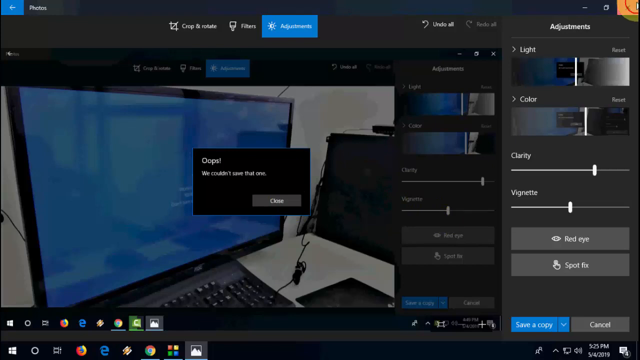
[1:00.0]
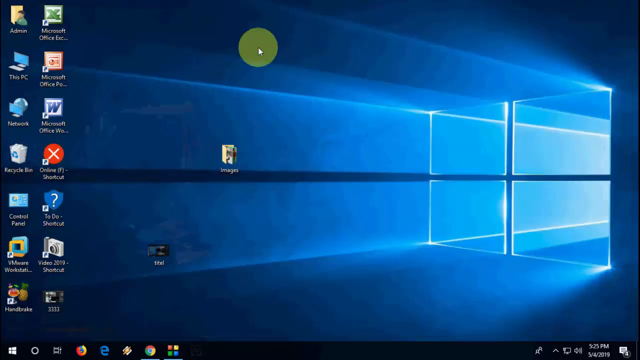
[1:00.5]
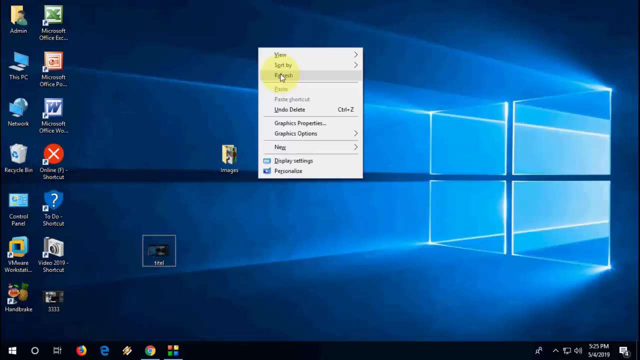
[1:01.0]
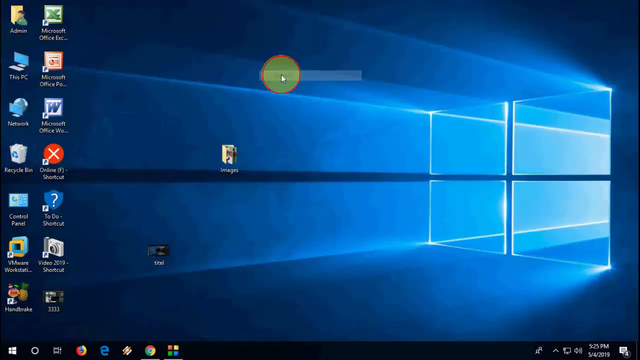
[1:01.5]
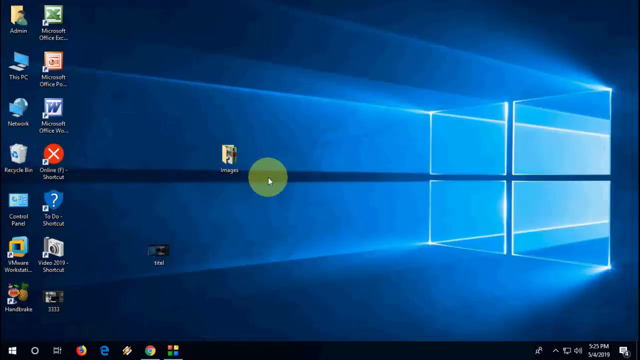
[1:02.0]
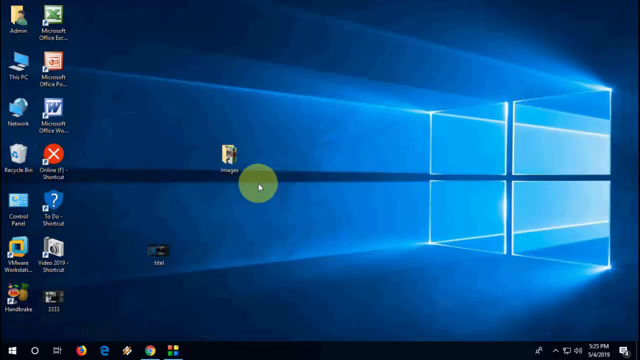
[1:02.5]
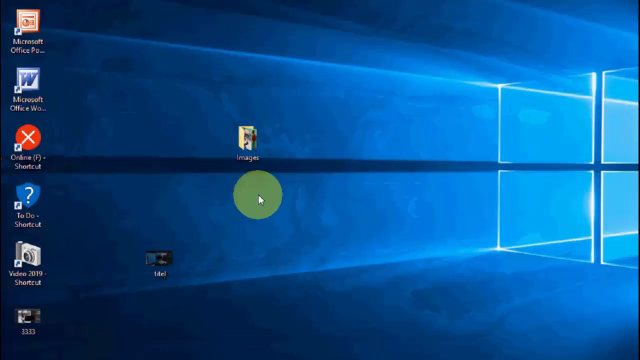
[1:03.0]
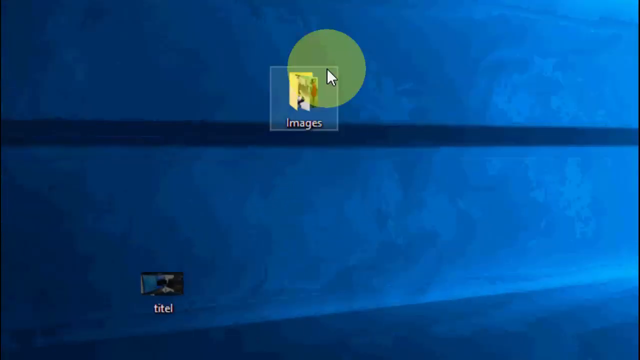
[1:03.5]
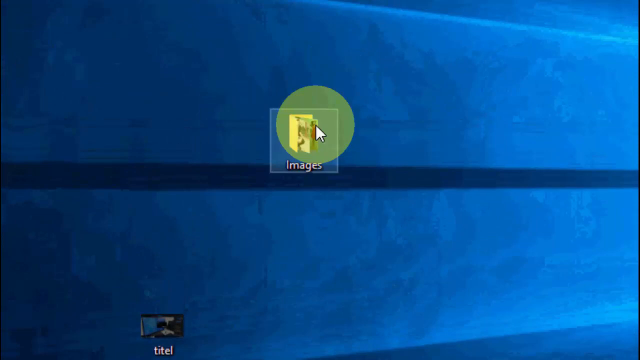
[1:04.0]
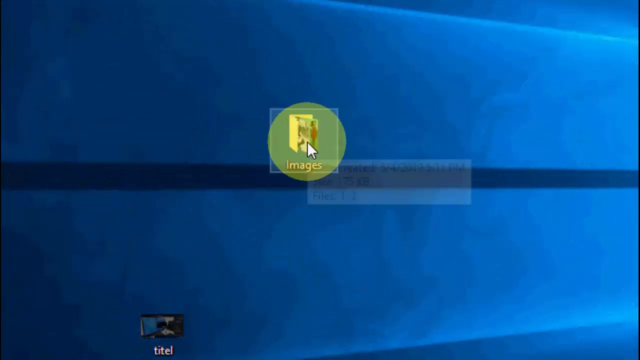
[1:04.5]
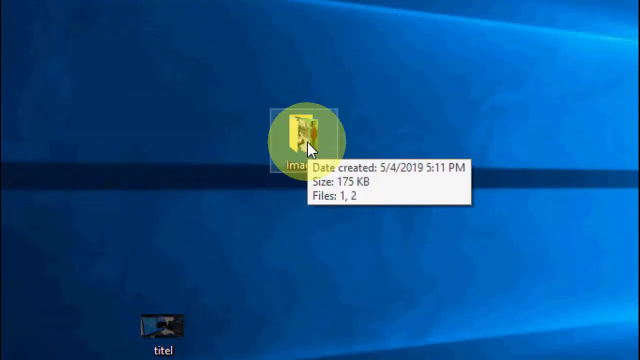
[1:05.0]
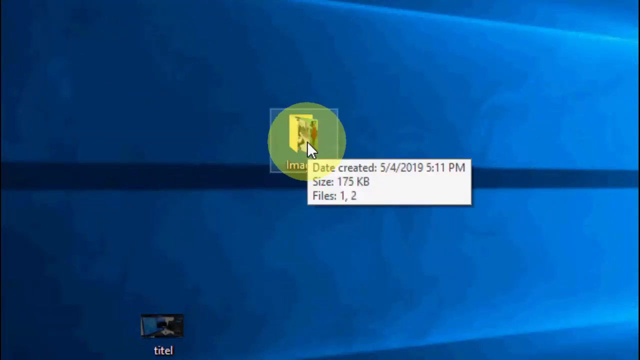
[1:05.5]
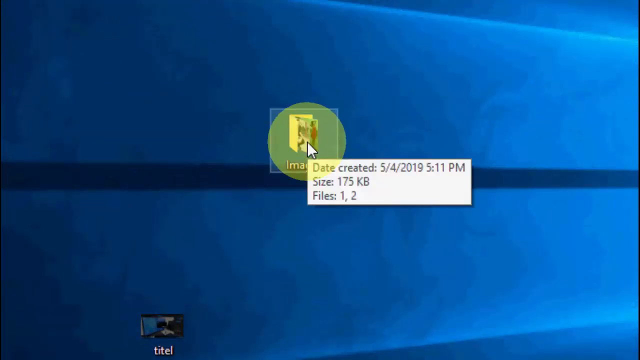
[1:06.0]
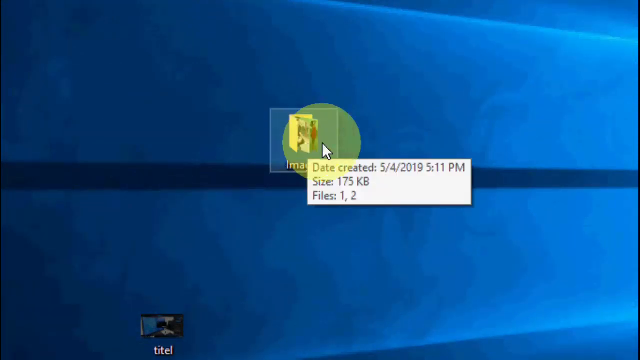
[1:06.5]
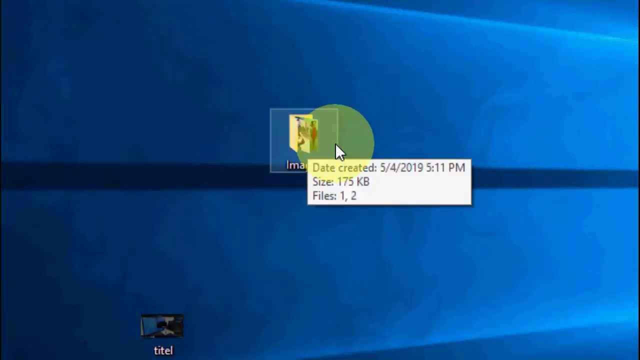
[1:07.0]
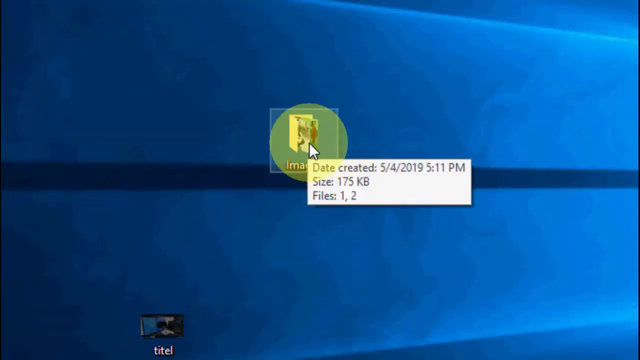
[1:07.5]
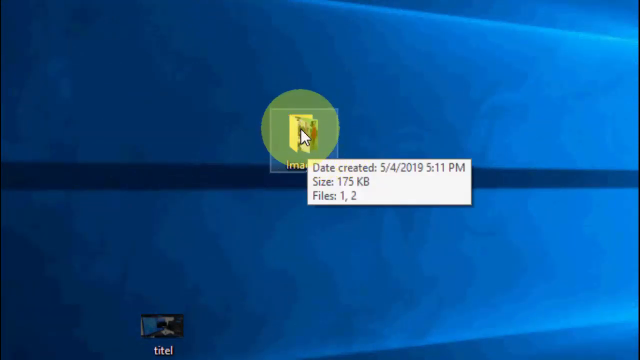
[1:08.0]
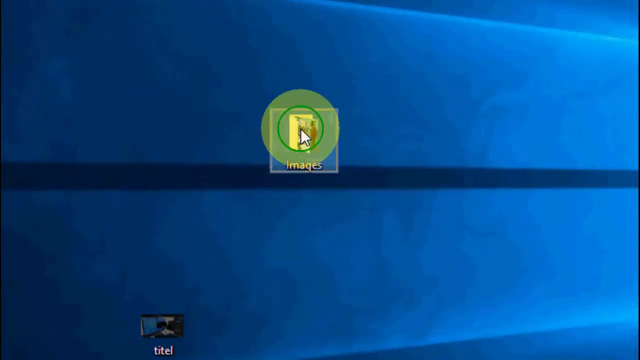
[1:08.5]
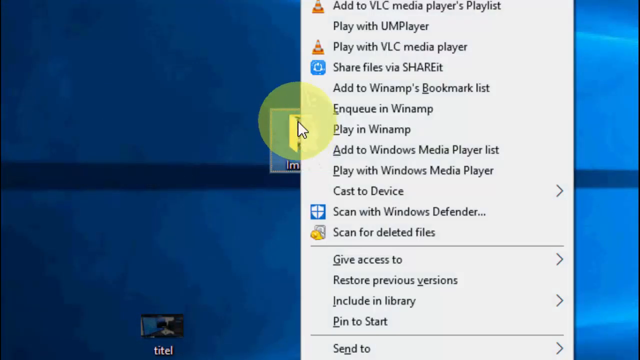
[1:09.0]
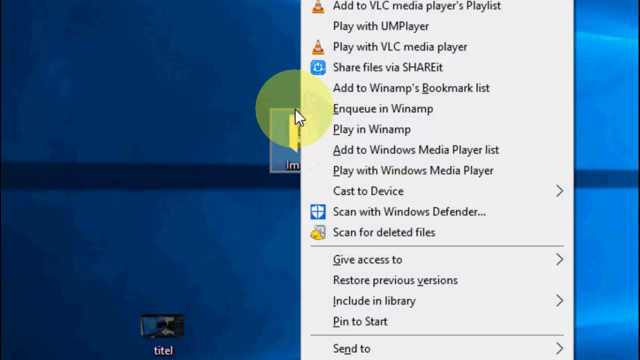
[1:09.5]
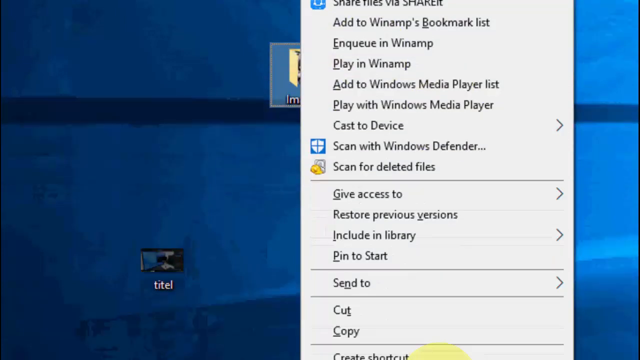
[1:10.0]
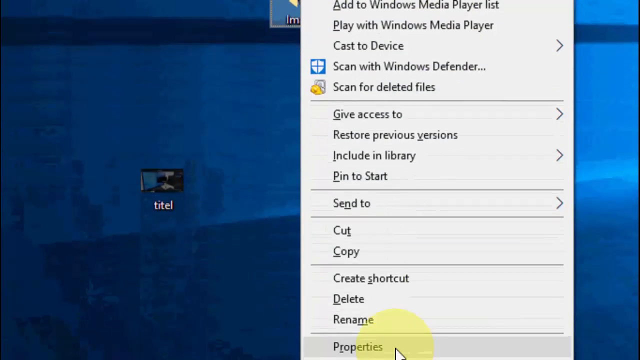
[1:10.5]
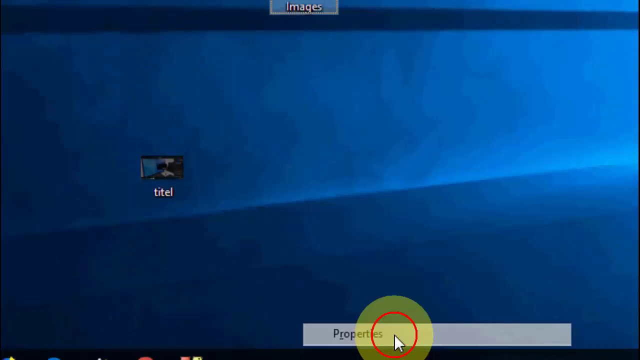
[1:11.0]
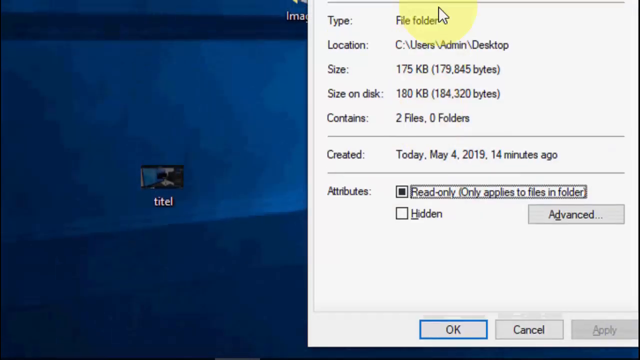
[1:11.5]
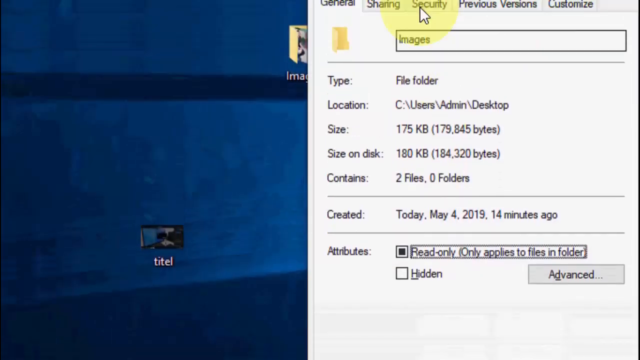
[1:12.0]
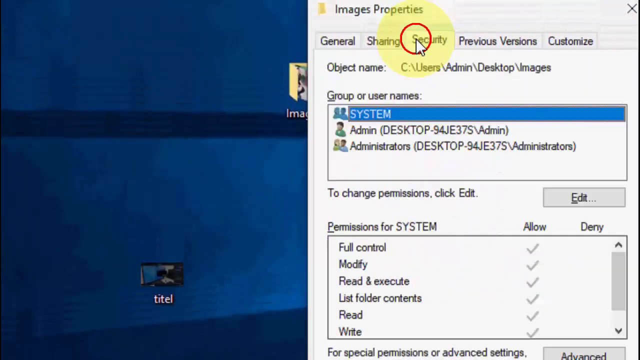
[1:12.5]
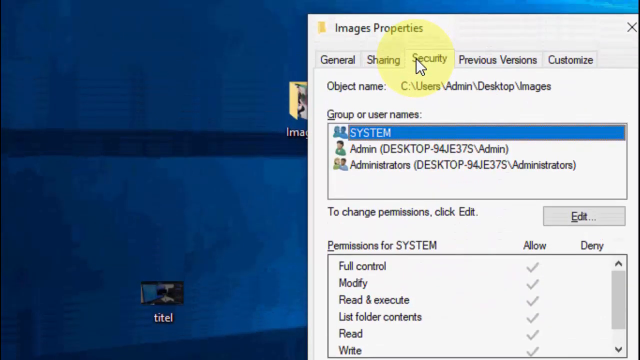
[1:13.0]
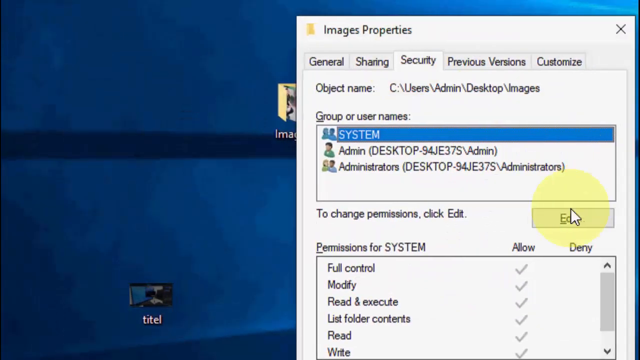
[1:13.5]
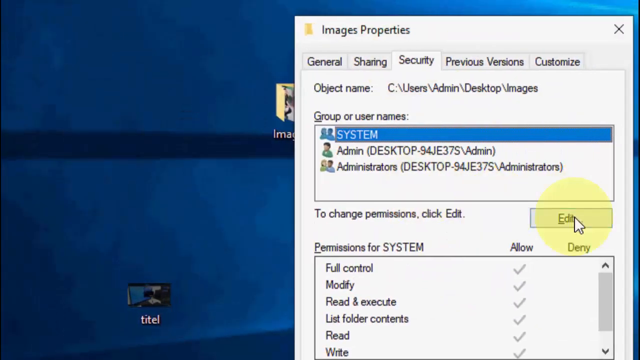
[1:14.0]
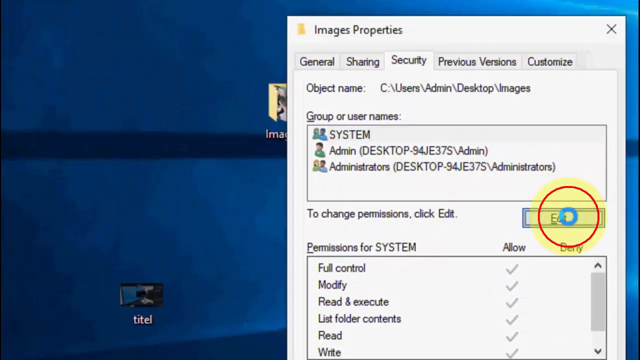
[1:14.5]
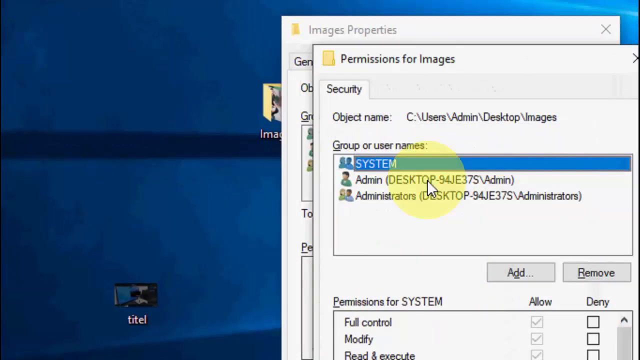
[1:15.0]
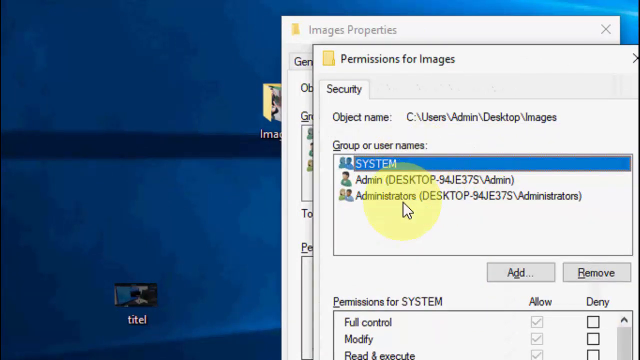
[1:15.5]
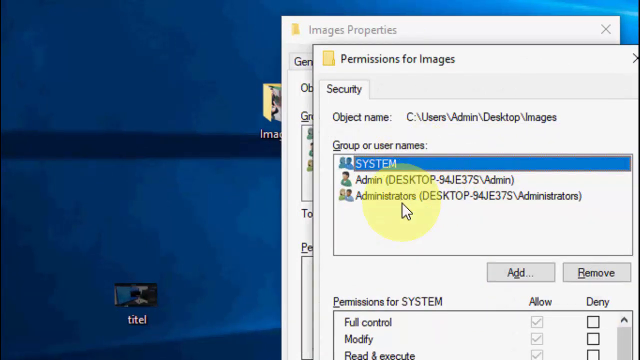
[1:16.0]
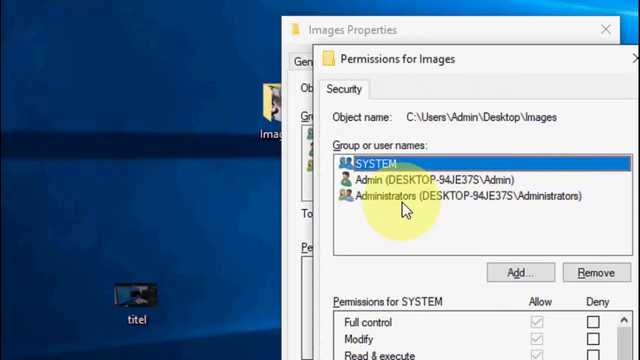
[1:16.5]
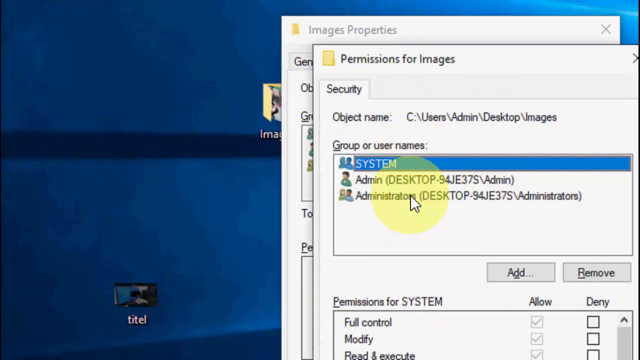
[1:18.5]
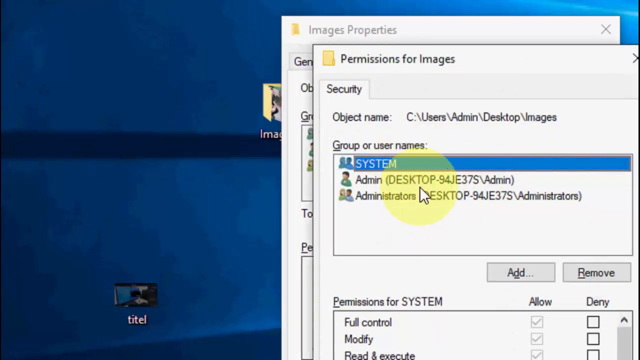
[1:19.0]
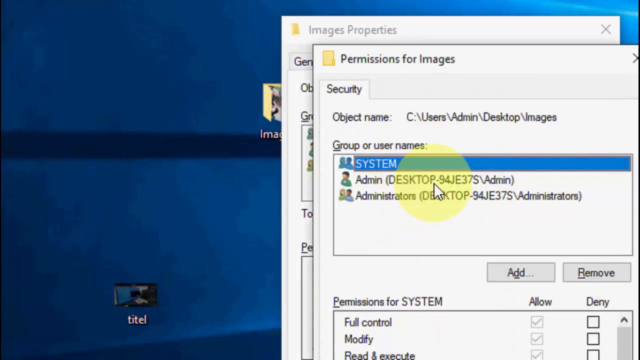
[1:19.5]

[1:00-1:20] With the editor closed, the desktop is back on screen, showing shortcuts, apps and a few folders. The user right-clicks an empty space on the desktop and clicks refresh. The view then zooms in on a folder named images, which is 127.77 kb. The user right-clicks it, showing options such as add to VLC media player list, play with UM player, play with VLC media player, share files via shareit, add to winmaps bookmark list, enqueue in winmap, play in winmap, play with Windows Media Player, cast to device, scan with Windows Defender, scan for deleted files, give access to, restore previous version, include in library, and pin to start. The user scrolls down and clicks on the image properties, which have tabs including general, security, previous version and customize. The user clicks security, where the group or user names listed are system, admin and administrators. There is also an edit button, which the user clicks.